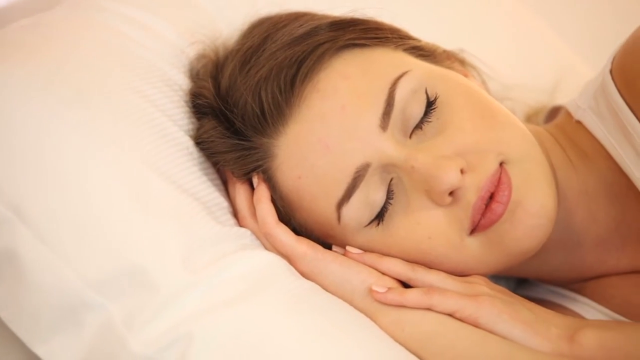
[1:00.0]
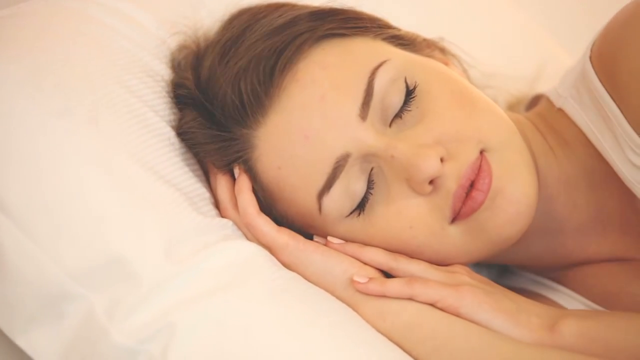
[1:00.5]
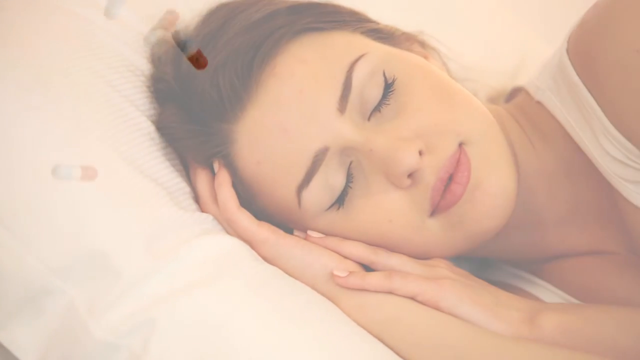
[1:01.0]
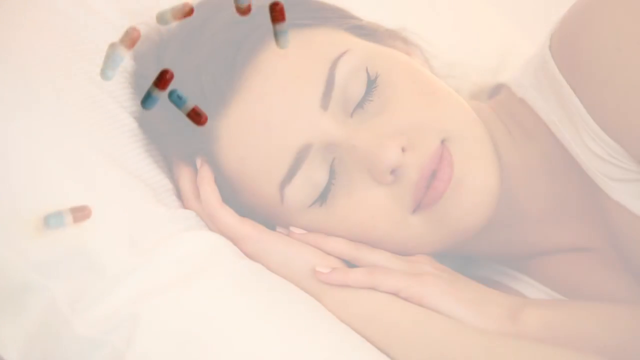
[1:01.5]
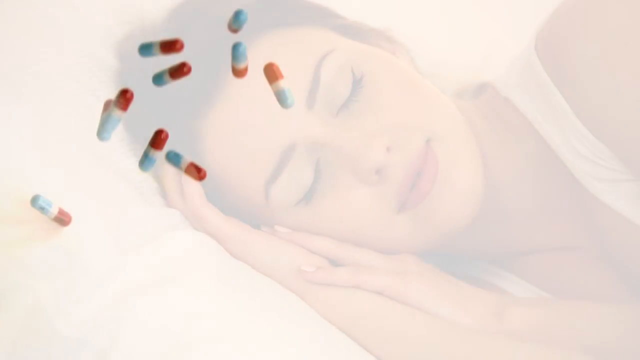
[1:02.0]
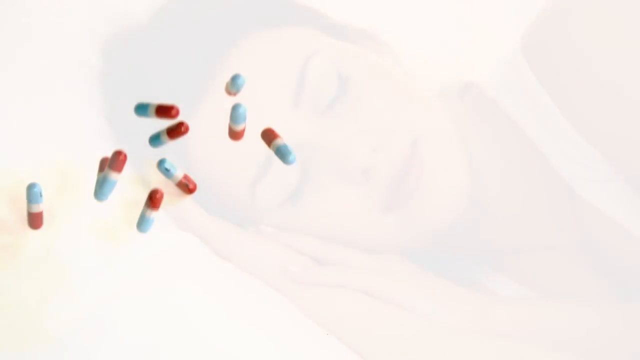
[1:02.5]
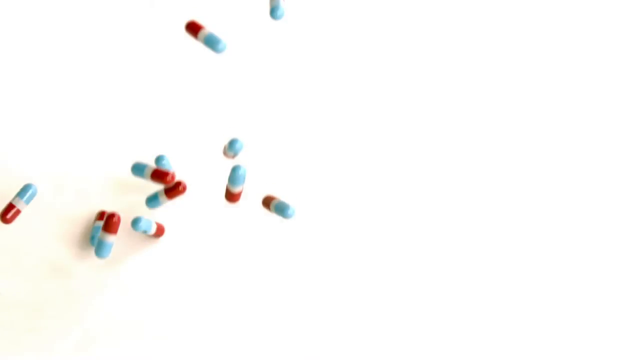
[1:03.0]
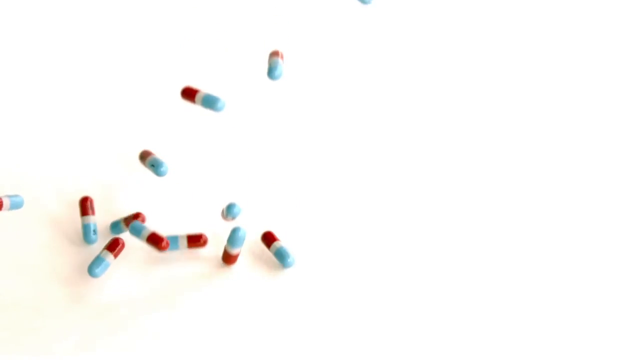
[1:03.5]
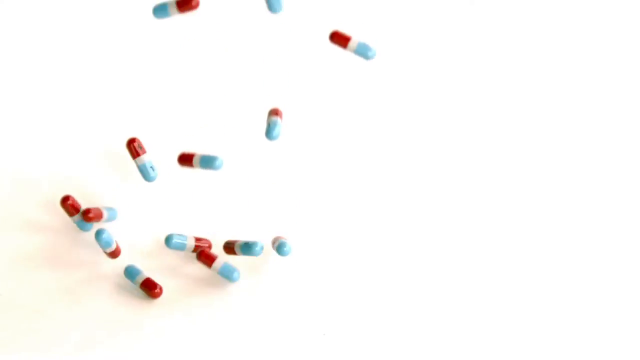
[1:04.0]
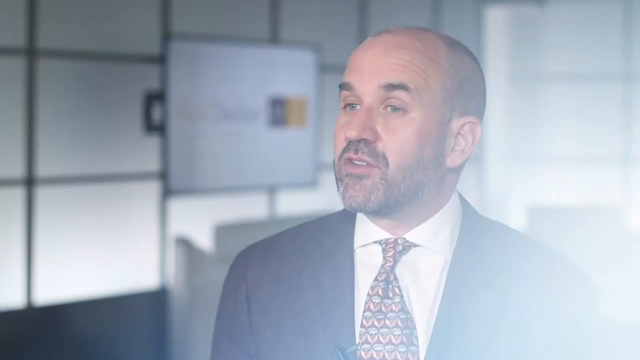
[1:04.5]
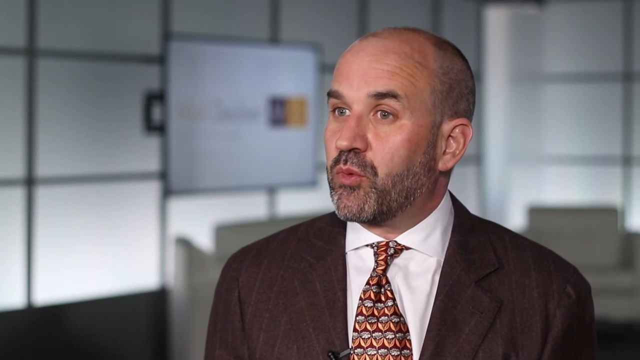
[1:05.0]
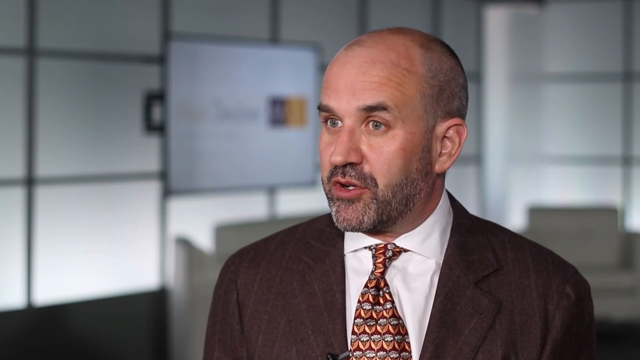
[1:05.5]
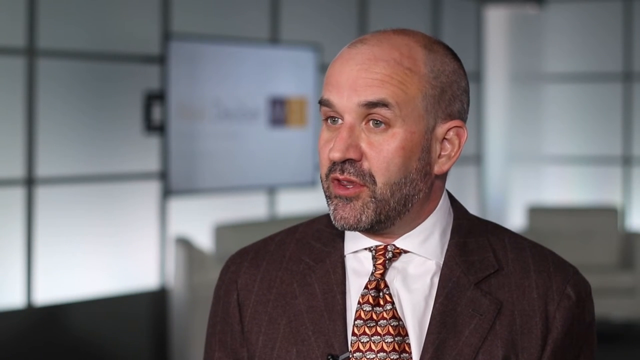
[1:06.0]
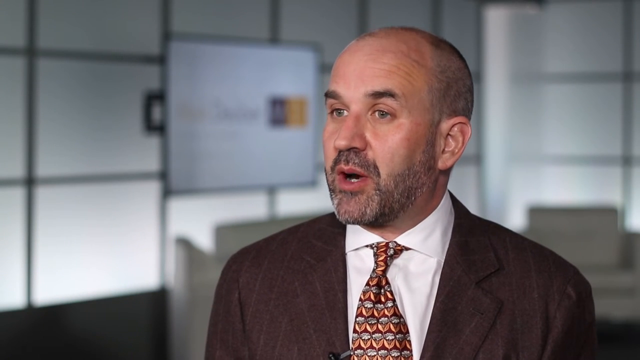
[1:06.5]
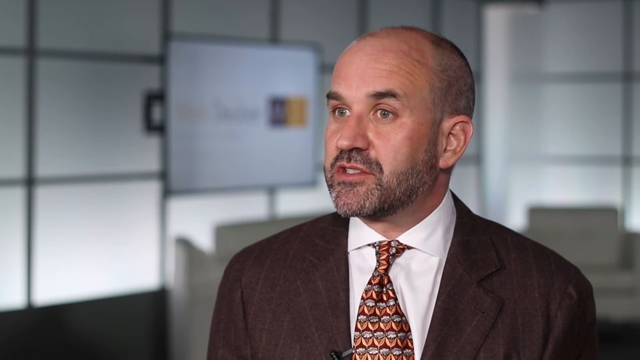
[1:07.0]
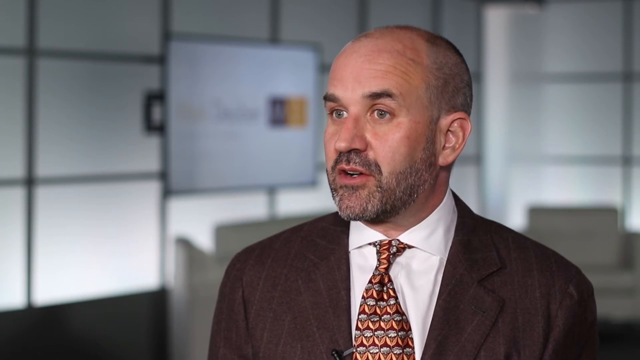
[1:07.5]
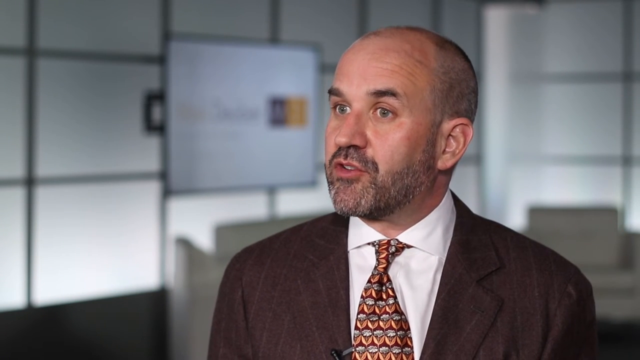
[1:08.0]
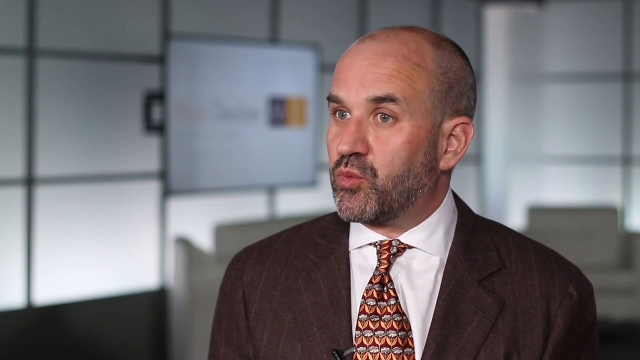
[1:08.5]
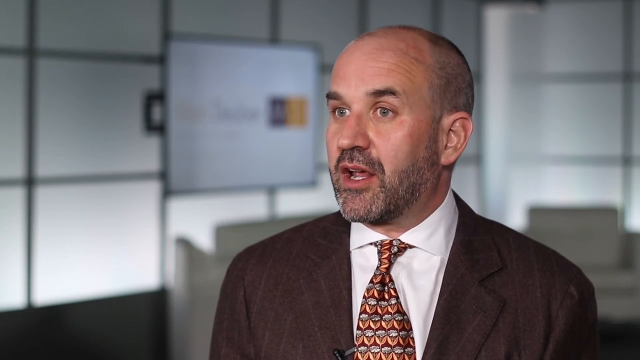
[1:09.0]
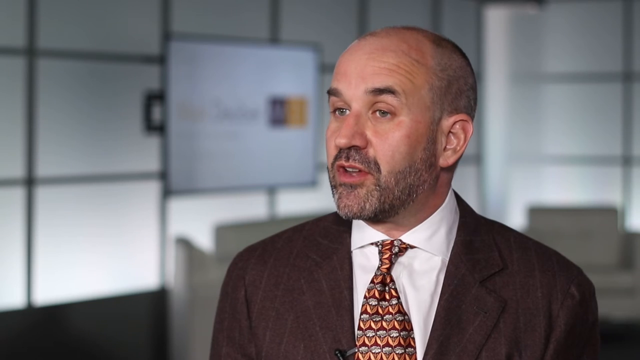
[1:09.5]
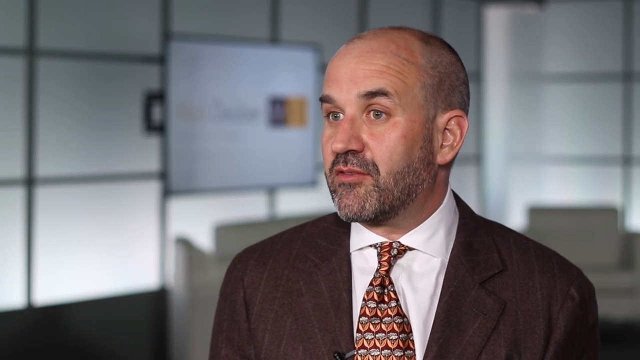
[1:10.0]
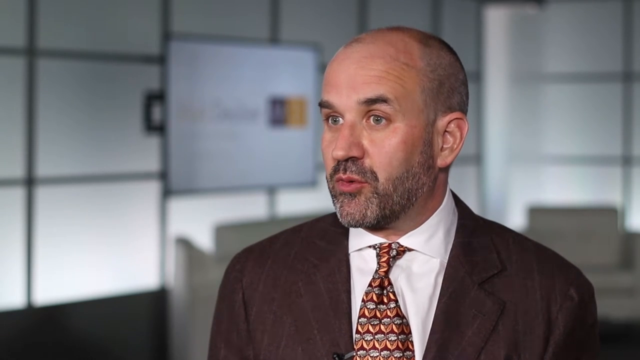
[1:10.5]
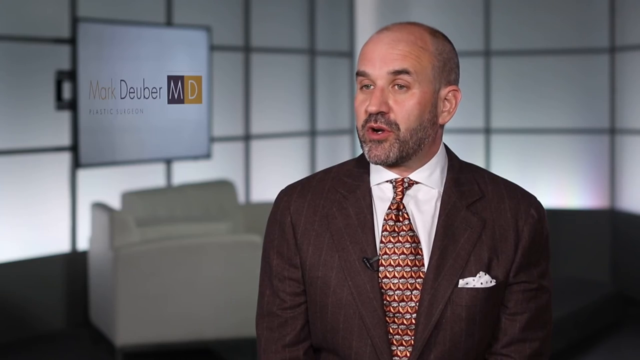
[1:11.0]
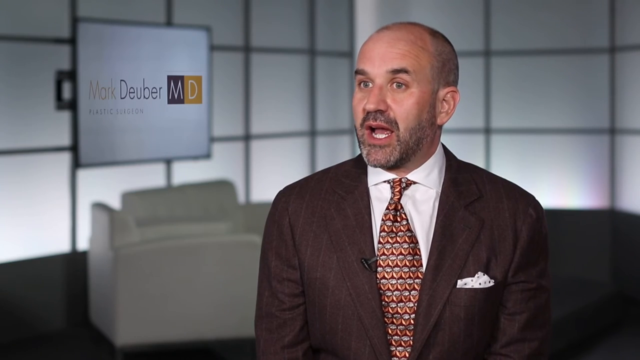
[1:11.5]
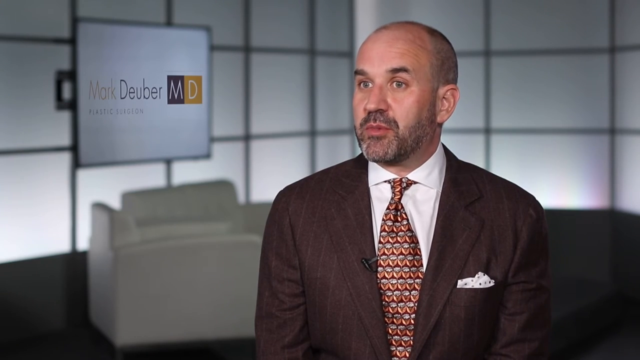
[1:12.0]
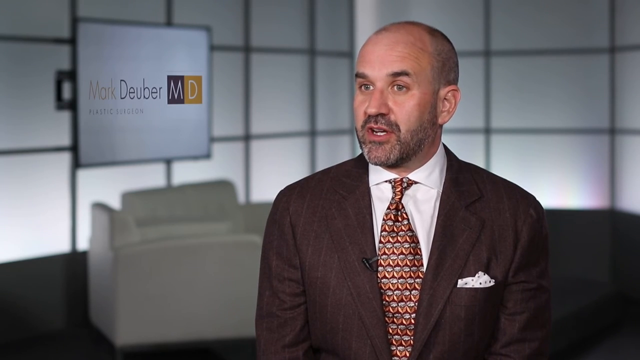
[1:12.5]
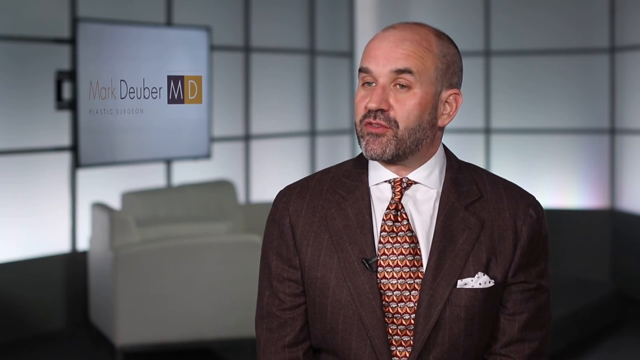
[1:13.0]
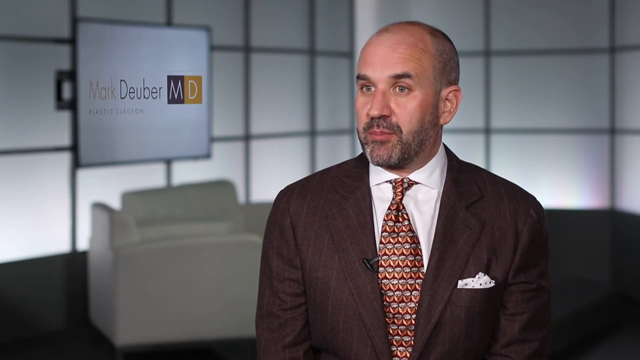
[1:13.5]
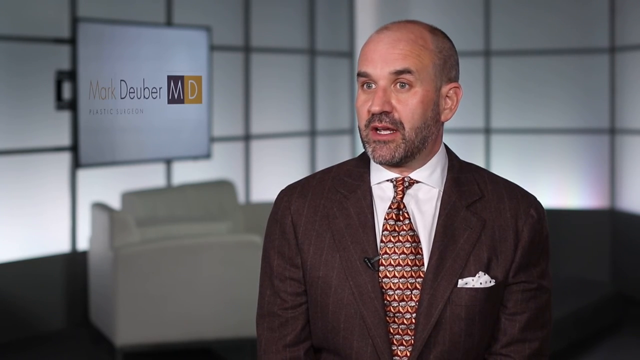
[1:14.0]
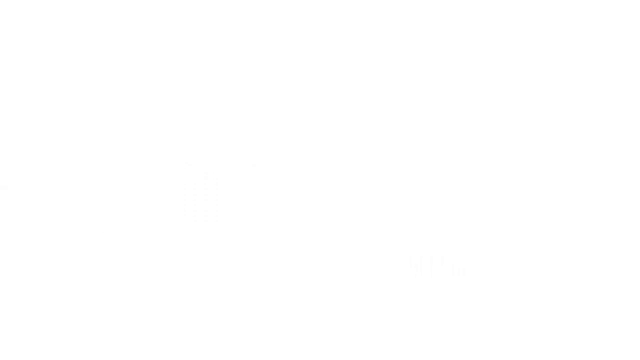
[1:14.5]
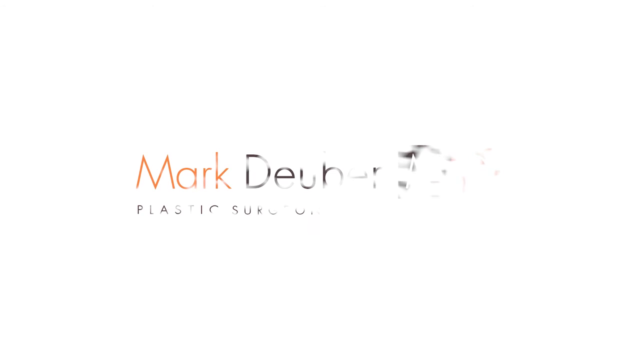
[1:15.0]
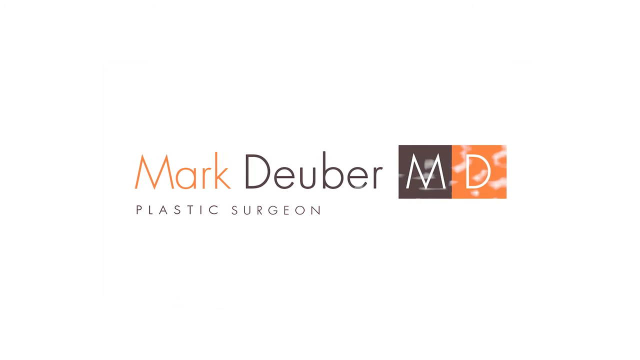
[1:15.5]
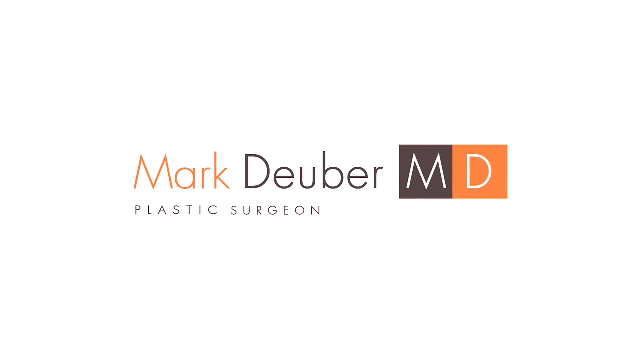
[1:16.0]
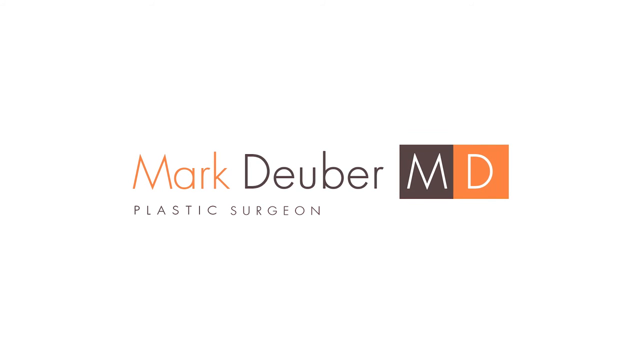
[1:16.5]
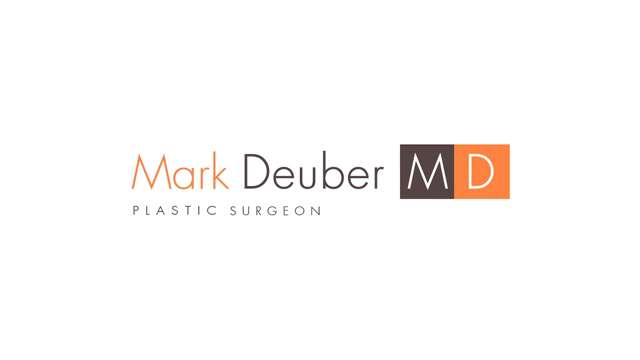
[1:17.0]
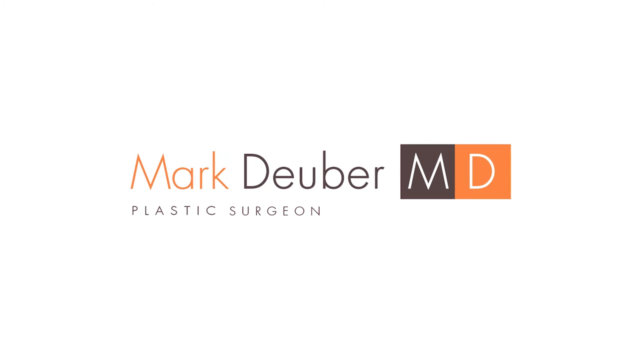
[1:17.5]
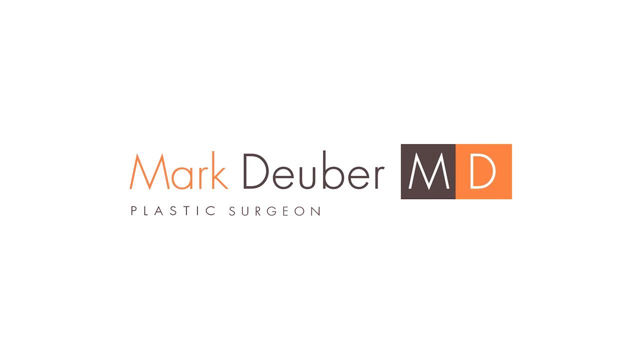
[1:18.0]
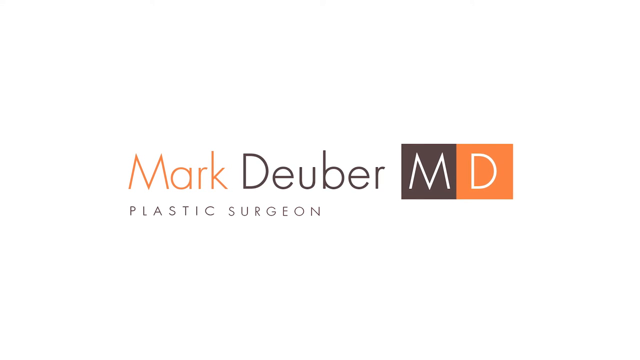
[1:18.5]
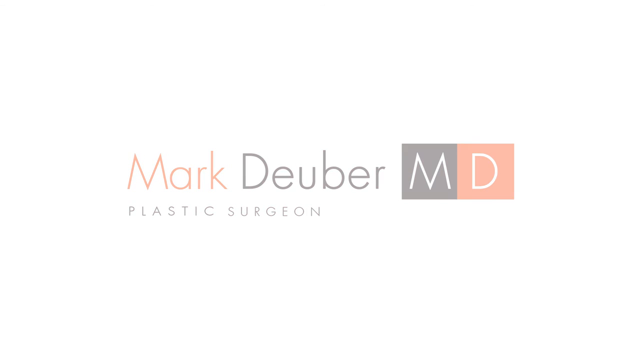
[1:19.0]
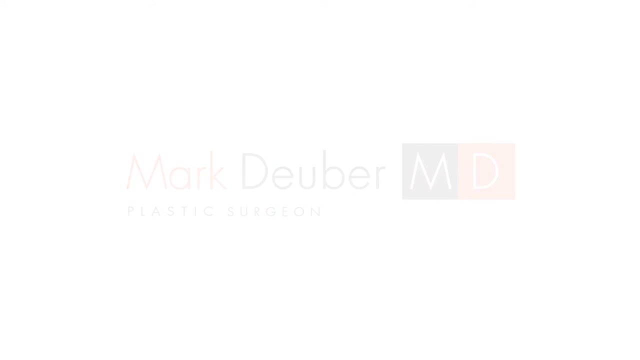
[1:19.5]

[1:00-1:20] The camera pans over a still image of a woman sleeping on her side with her hands underneath her head. She looks maybe 30, with her hair back and a lot of makeup, most likely a model pretending to sleep. She fades away as pills or capsules float down on a white background. The capsules are light blue on one end, red on the other and white in the middle; they fall gently and then bounce. Next, a man being interviewed is shown from the chest up. He wears a black pinstripe suit jacket, a white collared dress shirt and a busy tie. He appears to have hazel or green eyes, slight wrinkles on his forehead, and a receding hairline with his hair kept extremely short. The sign behind him reads "Mark Deuber MD." That disappears, leaving a white background with the text "Mark Deuber MD" and, underneath, "plastic surgeon."